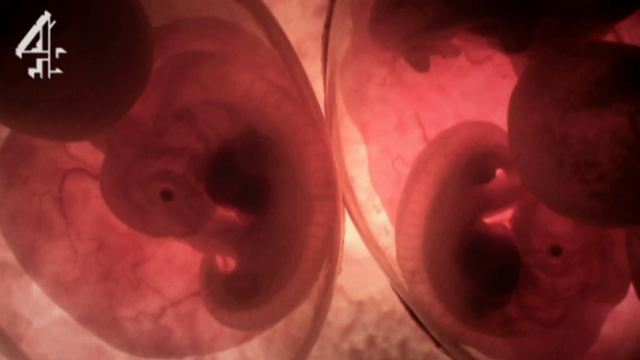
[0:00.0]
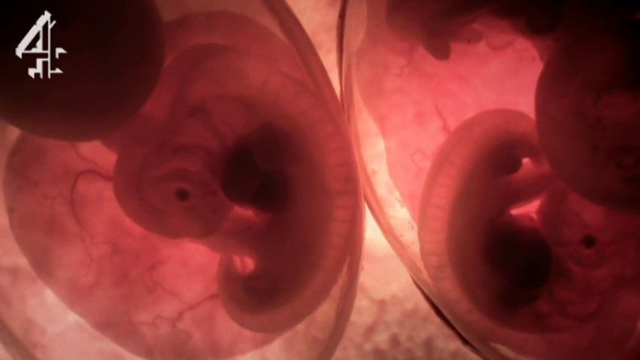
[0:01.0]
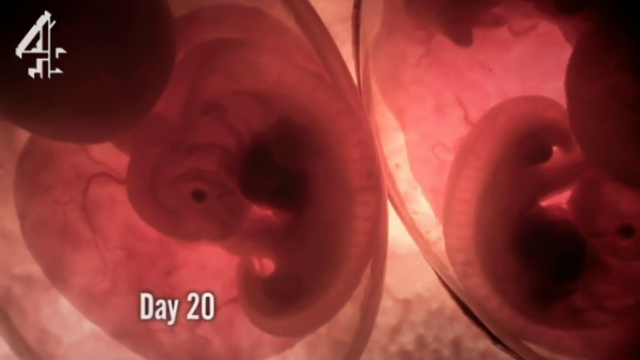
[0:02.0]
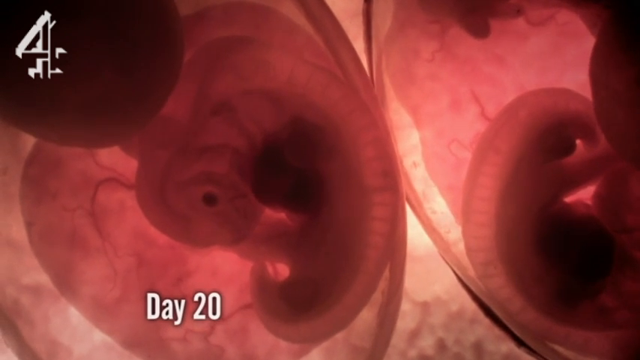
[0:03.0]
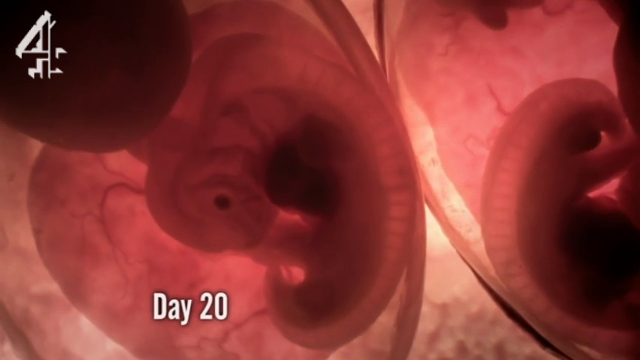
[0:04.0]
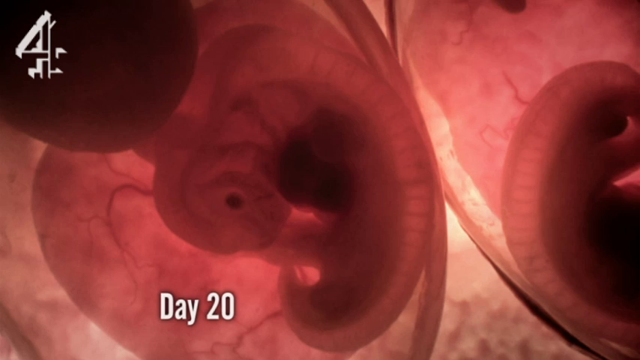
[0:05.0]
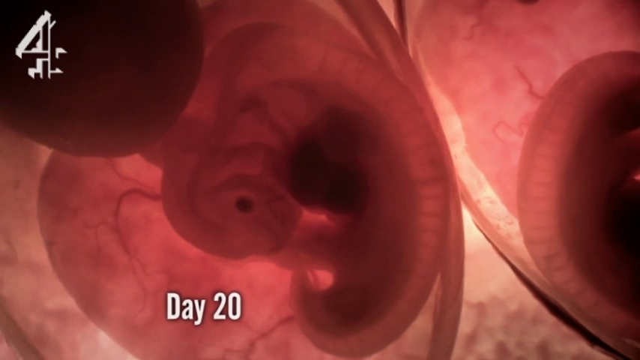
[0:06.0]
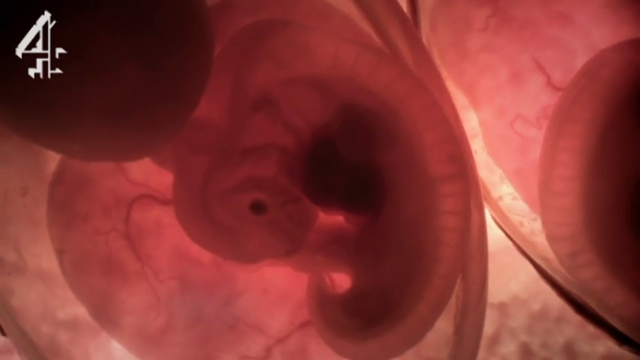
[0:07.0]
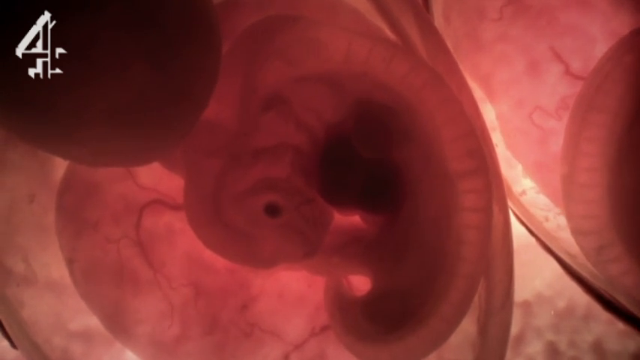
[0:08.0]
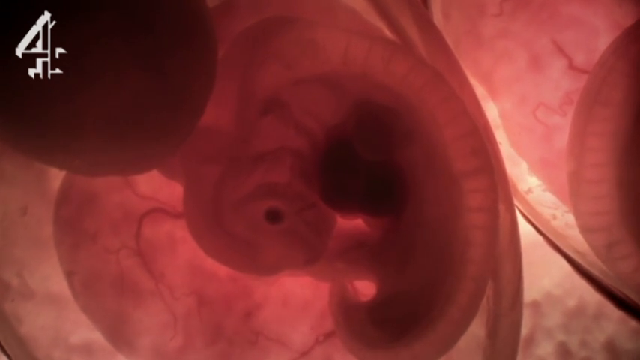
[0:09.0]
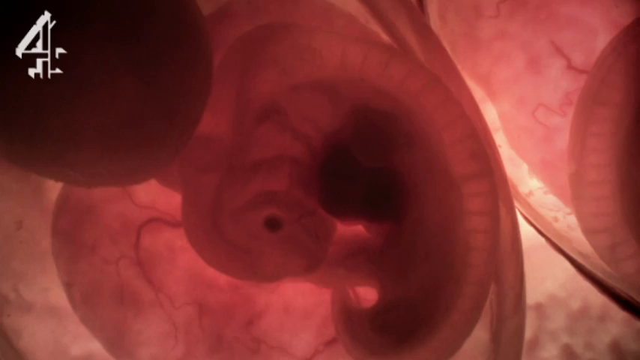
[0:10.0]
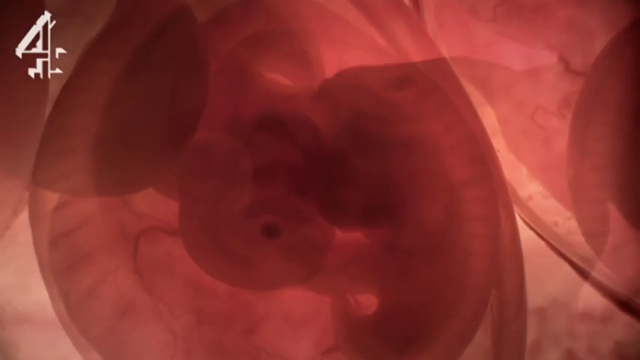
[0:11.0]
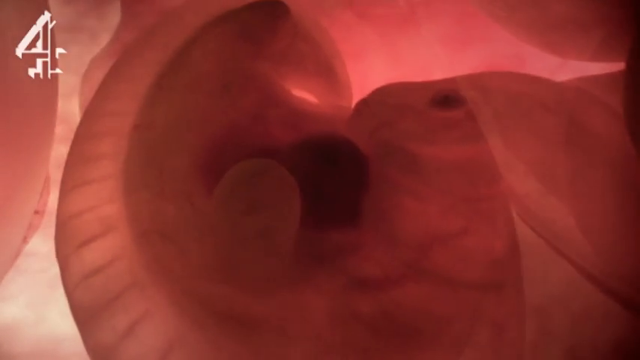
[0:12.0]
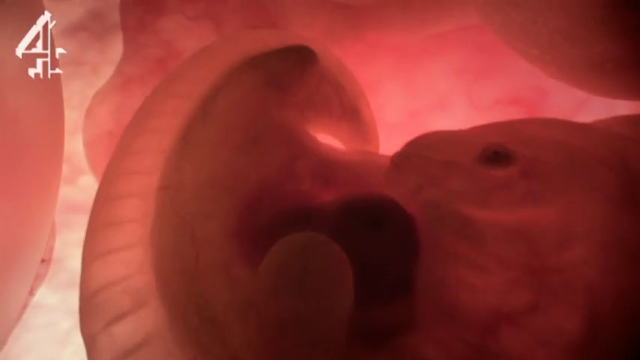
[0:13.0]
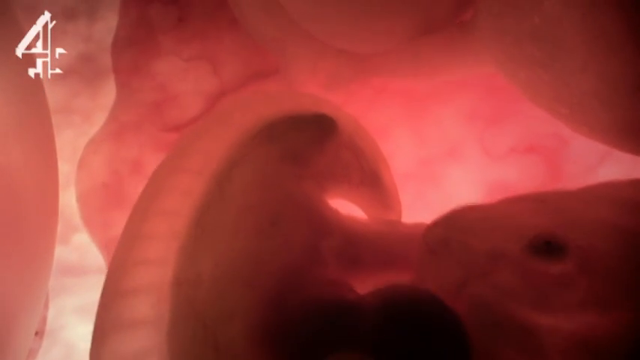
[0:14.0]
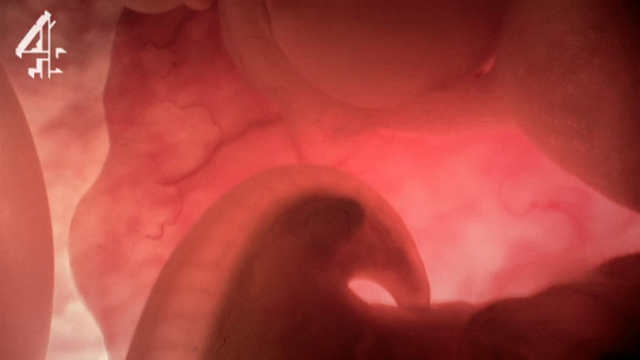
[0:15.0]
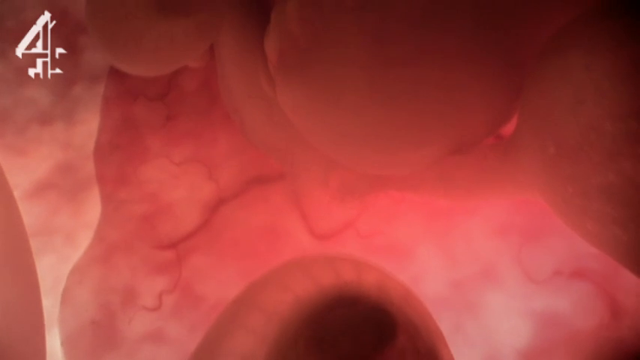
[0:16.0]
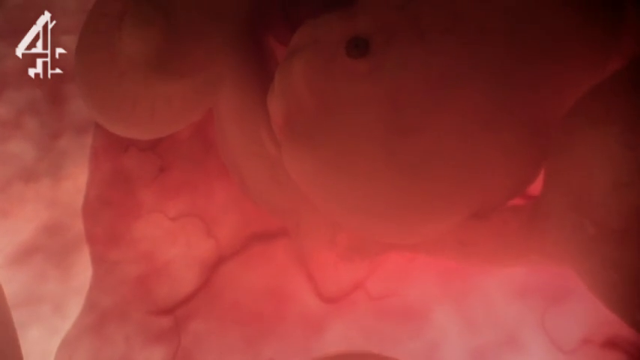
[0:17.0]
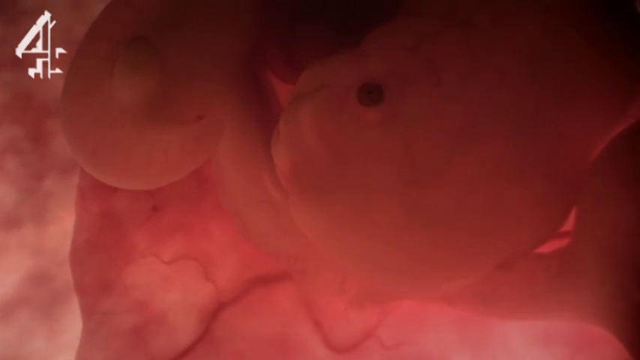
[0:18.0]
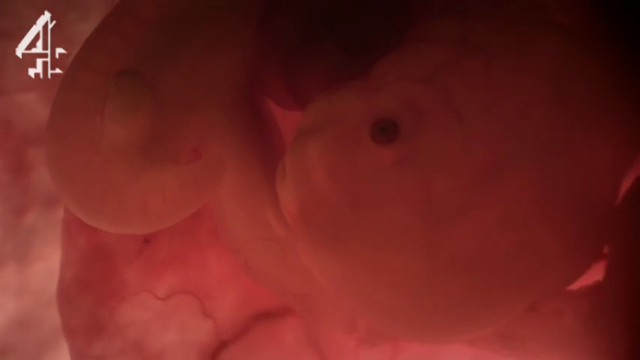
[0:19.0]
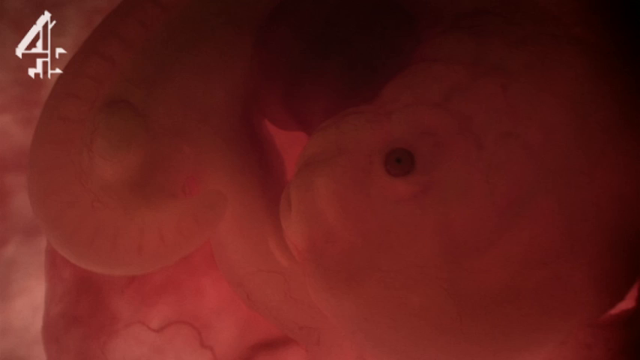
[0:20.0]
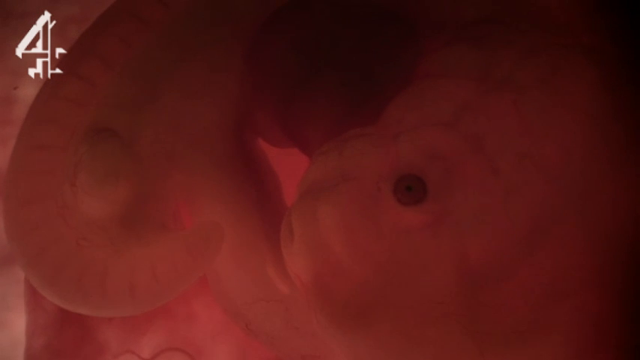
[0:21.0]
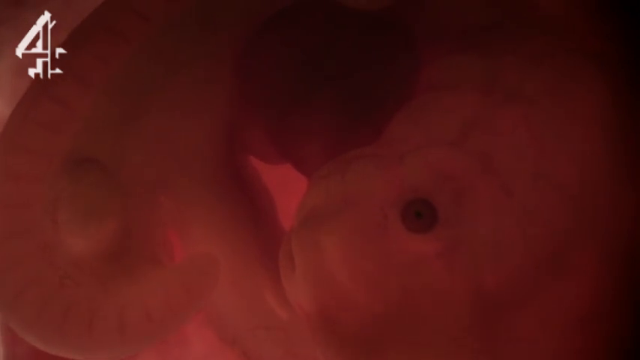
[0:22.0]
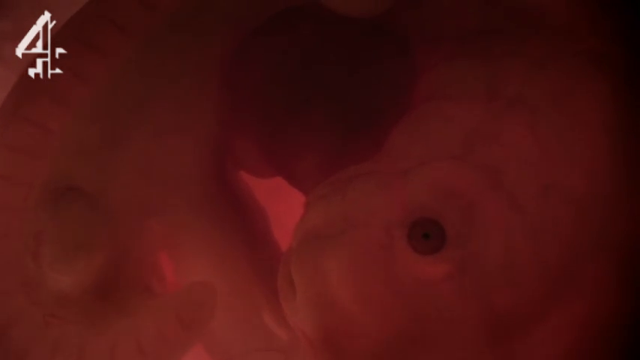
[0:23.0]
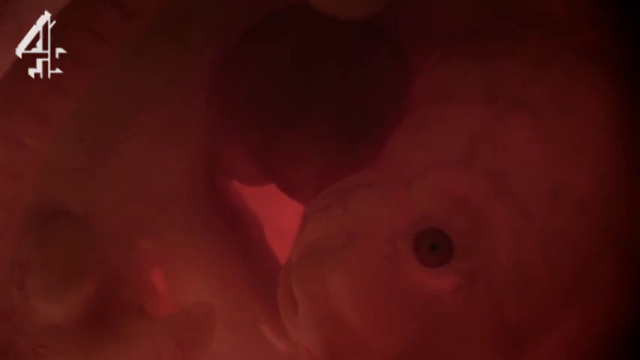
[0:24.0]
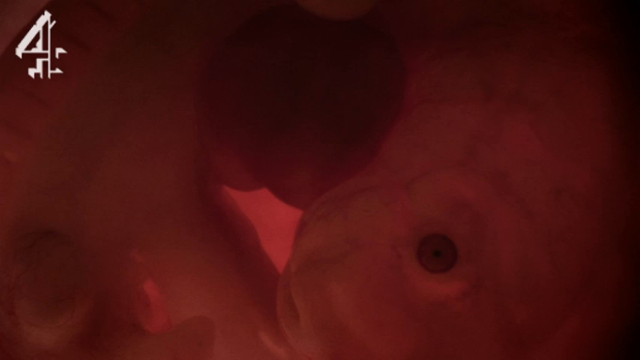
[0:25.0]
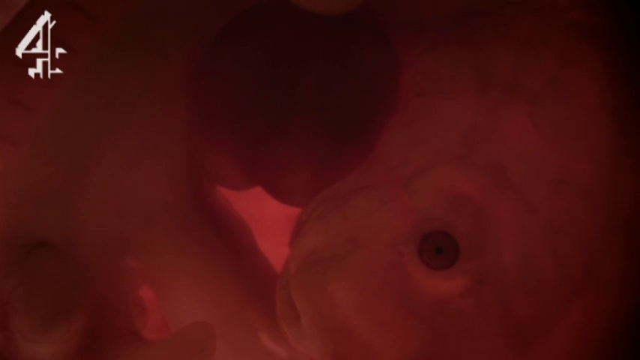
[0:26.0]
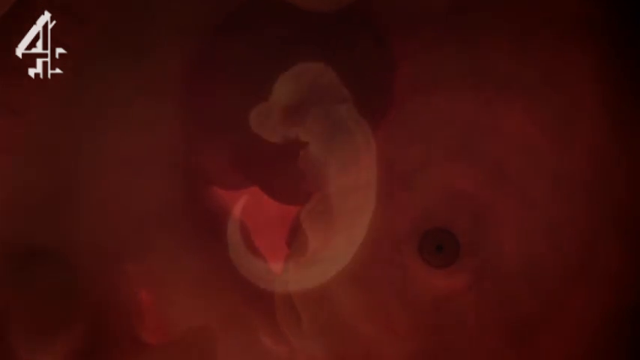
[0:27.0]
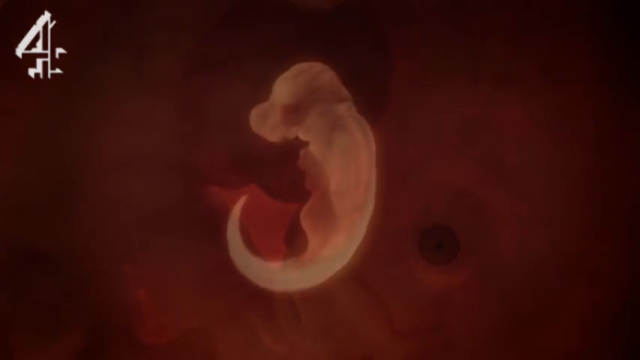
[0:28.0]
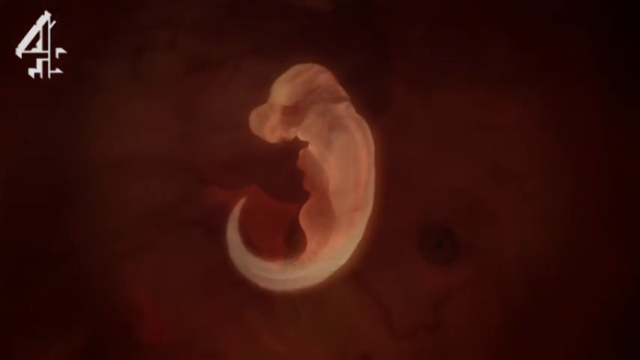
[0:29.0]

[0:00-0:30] A picture with multiple red and pink designs on it is shown. There are two distinct half ovals that look like they could form a circle. The smaller one is on the right side of the page and goes off the top right and the bottom right. The larger one extends from slightly toward the middle to the left side; it goes off the top and bottom of the page and off the left side. In the upper left corner is the number four in an almost black circle with a red tinge. The shapes are not moving, and the focus is more on the left side, where there appears to be an upside-down J type of object. The right of this object is inside that circle. Multiple bands go around a white, light pink area toward the inside of the circle, touching it. In the very middle of this object are three small dark red areas, a very dark red that is almost black. To the left, an area toward the bottom of the upside-down J has a black dot in it, and there are numerous red areas around it. The view fades into that object, moving down toward the bottom of the page. Another object has a dark area more to the right of the screen that almost looks like an eye: a round circle with a dark pinpoint in the middle.